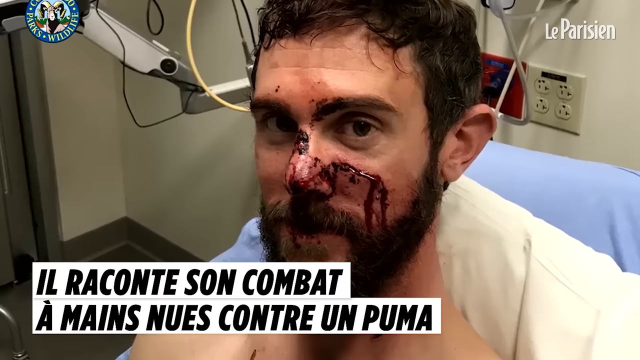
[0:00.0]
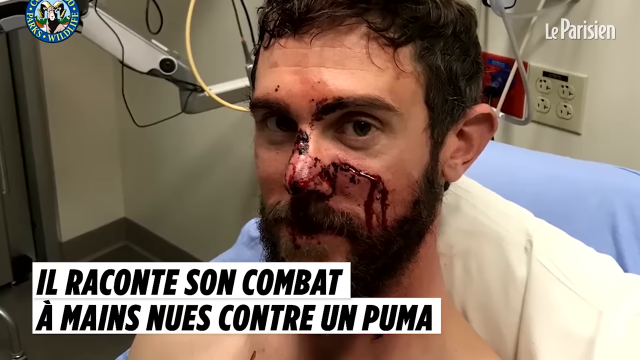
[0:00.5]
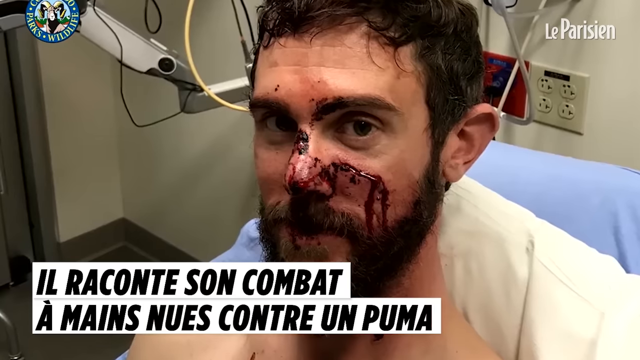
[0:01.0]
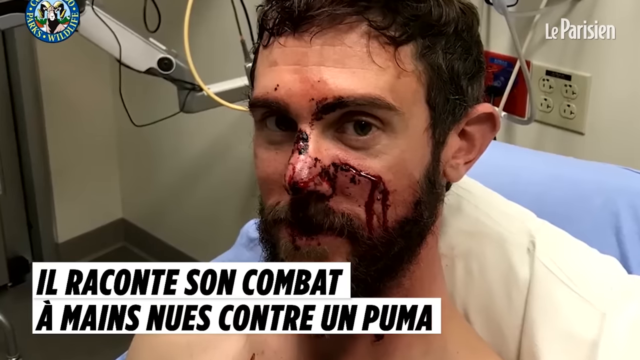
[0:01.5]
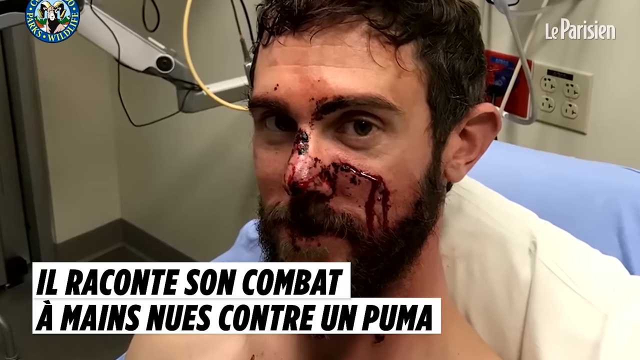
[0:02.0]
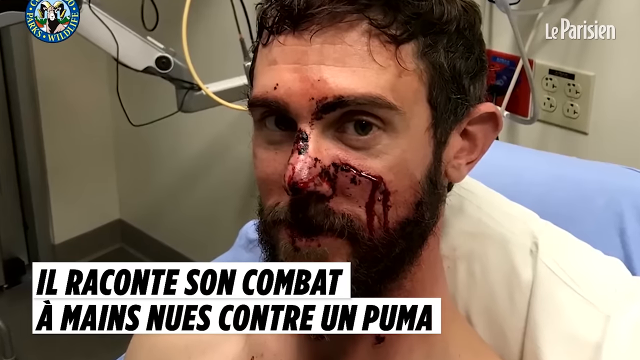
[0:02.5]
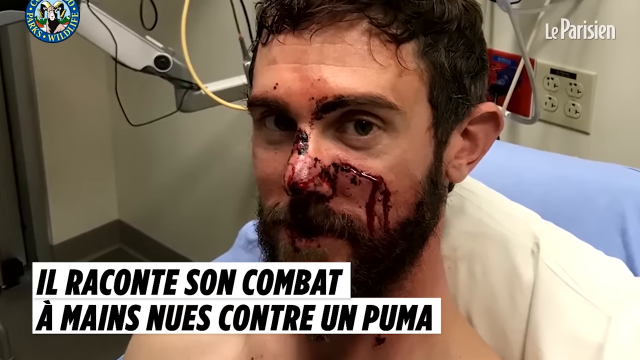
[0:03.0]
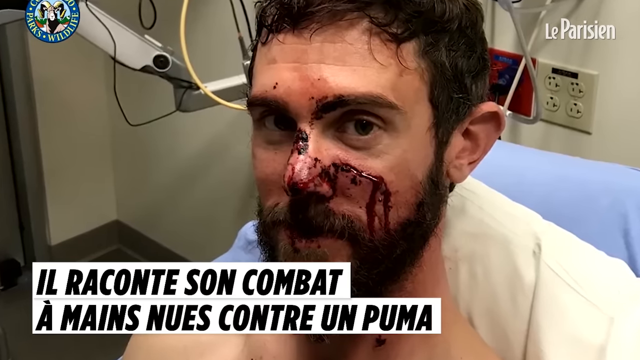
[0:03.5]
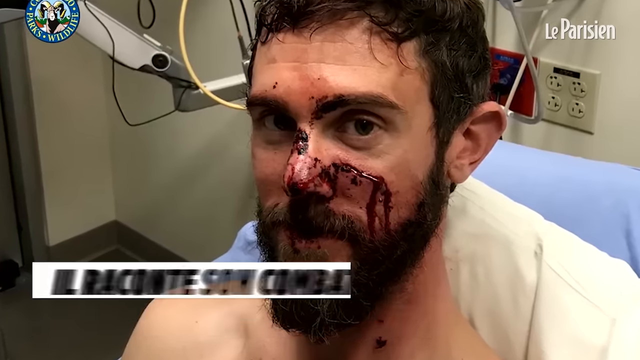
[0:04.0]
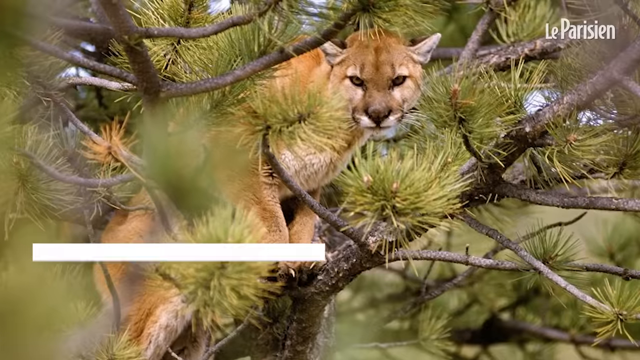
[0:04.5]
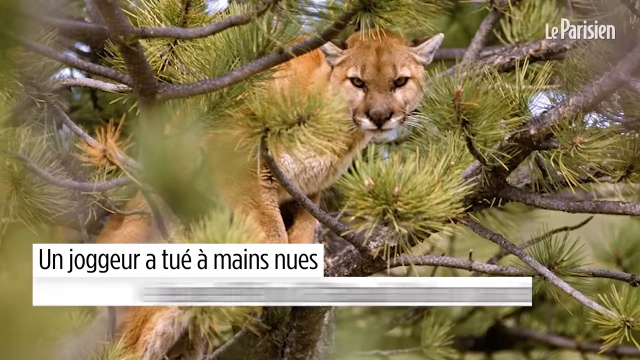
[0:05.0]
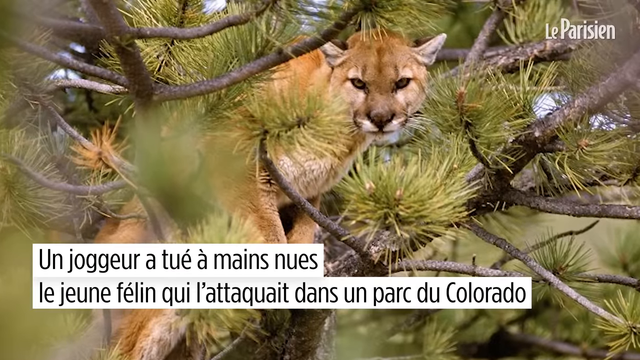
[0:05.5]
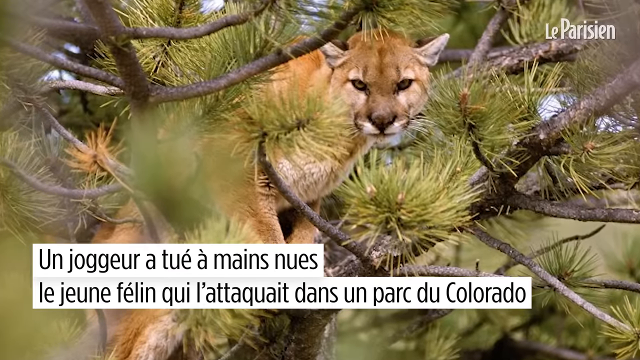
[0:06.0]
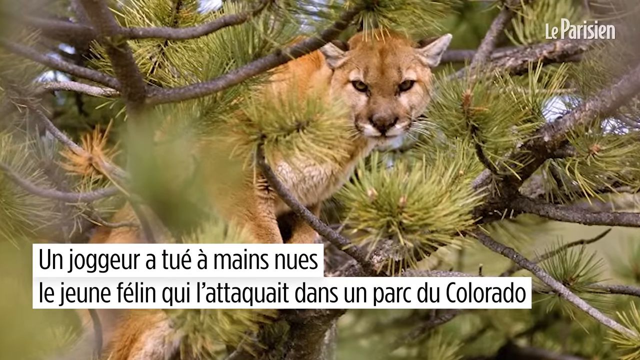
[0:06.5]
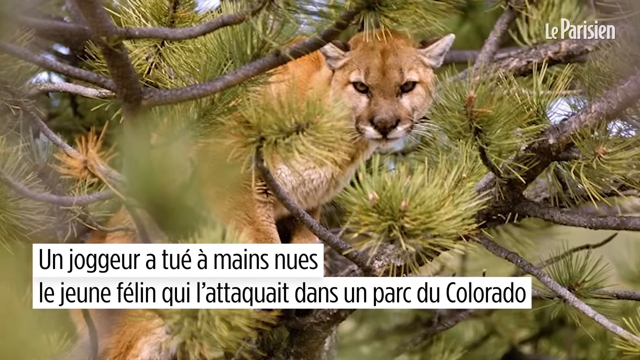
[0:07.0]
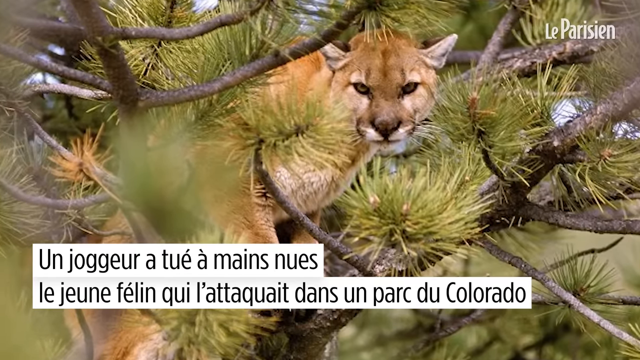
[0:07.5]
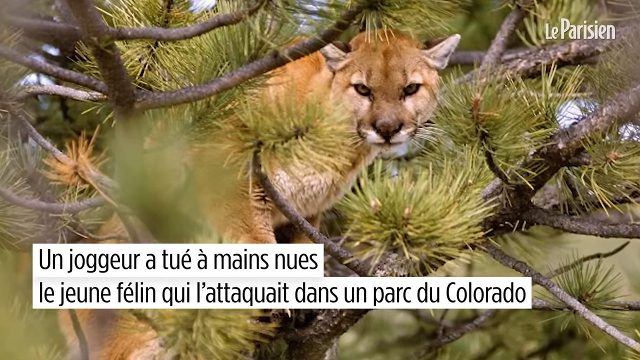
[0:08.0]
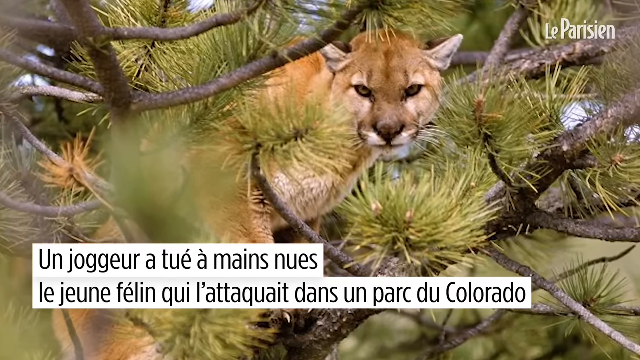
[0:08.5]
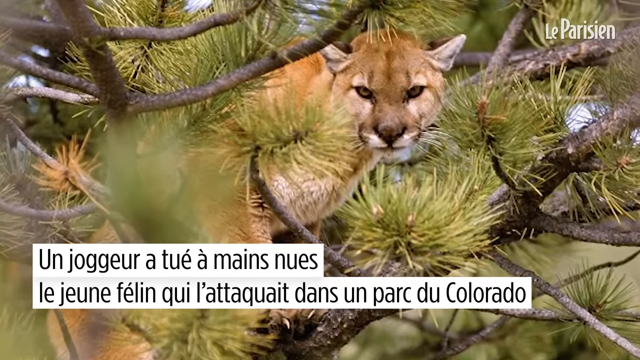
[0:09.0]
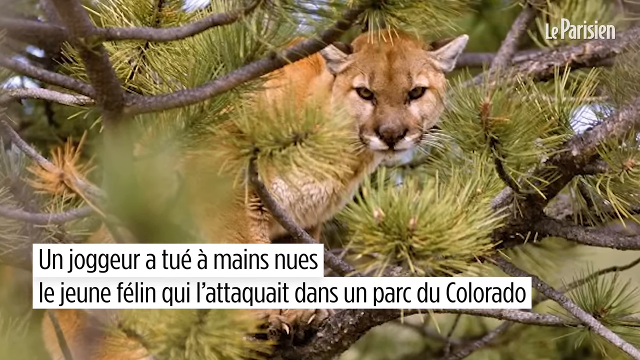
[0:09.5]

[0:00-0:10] A man with blood on his face is sitting on a blue hospital bed. He has short hair and a beard, is not wearing a shirt, and looks into the camera. Four outlets are behind him. Black text on a white background appears at the bottom, and the camera pans in slowly. The shot changes to a picture of a mountain lion in a tree, looking into the camera, as the camera slowly pans in. Black text on a white background is at the bottom, and a Le Parisien logo is at the top right of the picture.